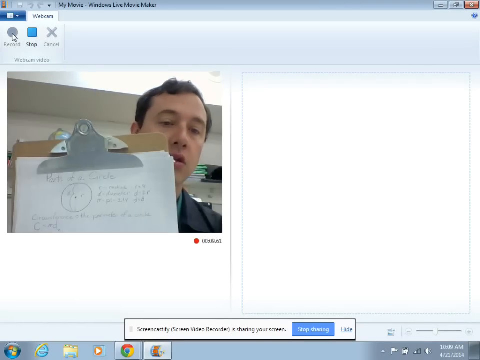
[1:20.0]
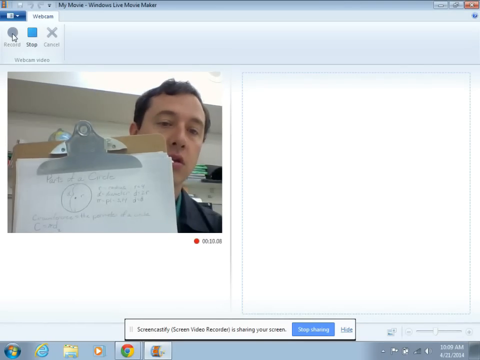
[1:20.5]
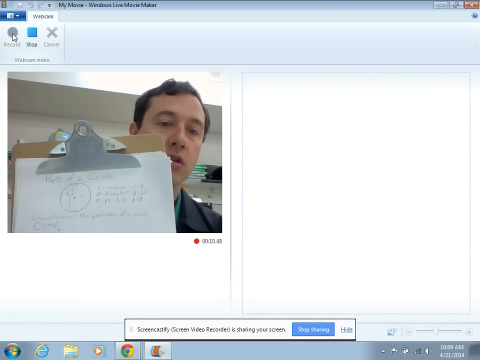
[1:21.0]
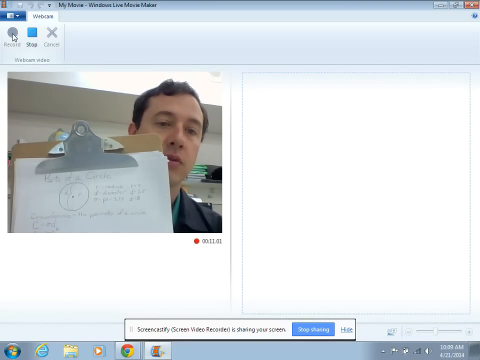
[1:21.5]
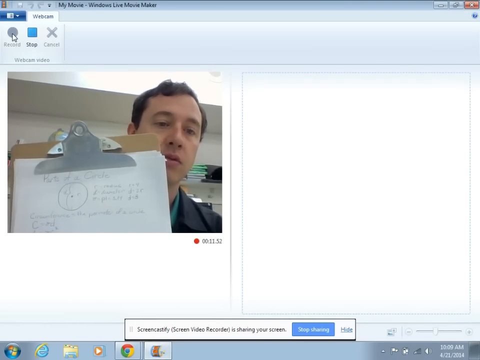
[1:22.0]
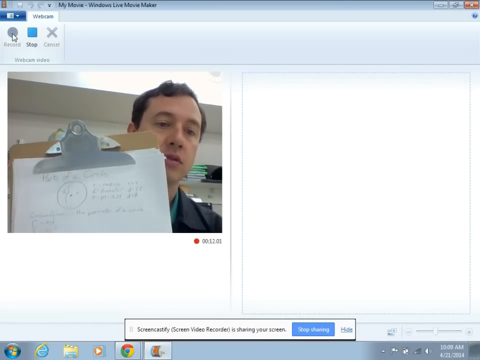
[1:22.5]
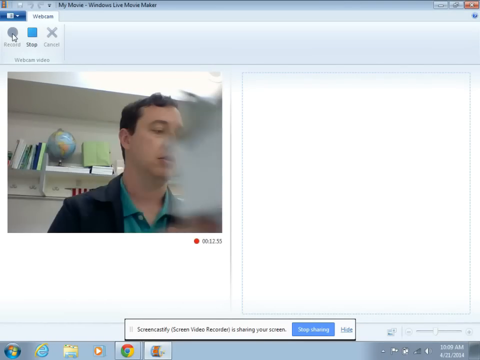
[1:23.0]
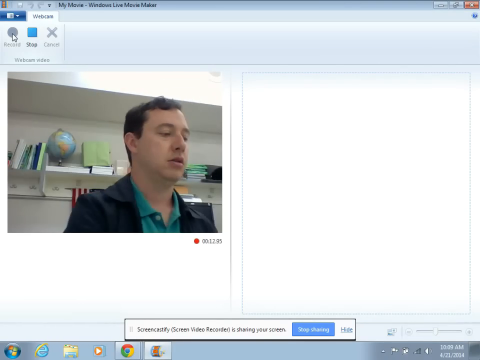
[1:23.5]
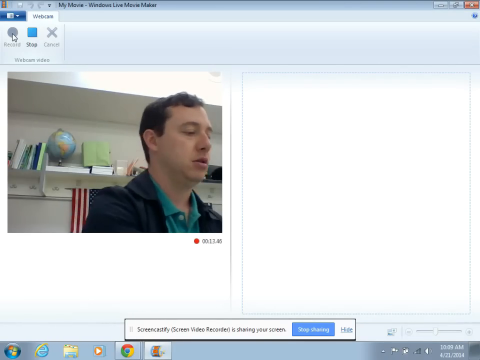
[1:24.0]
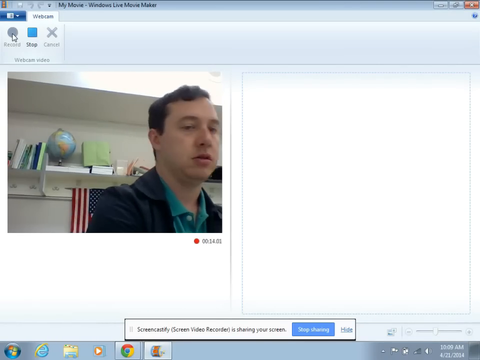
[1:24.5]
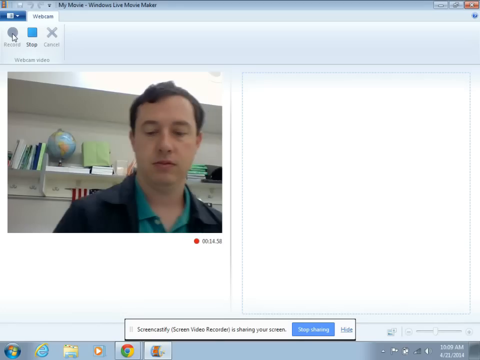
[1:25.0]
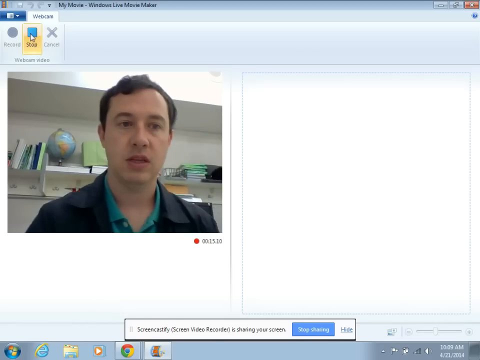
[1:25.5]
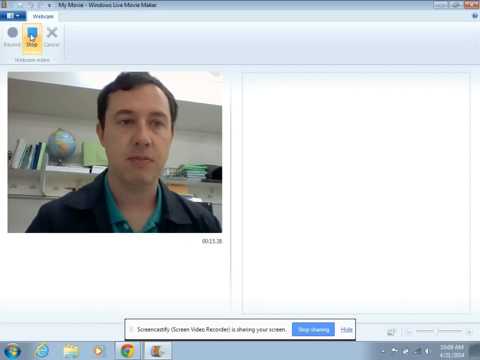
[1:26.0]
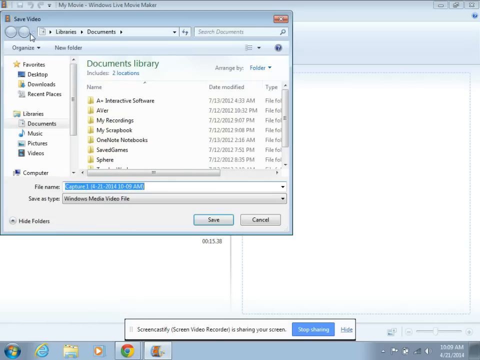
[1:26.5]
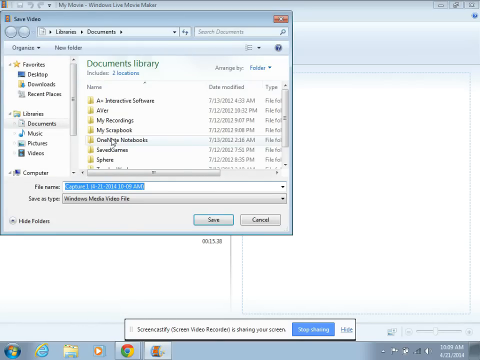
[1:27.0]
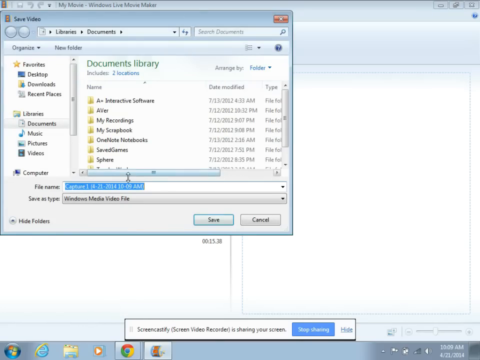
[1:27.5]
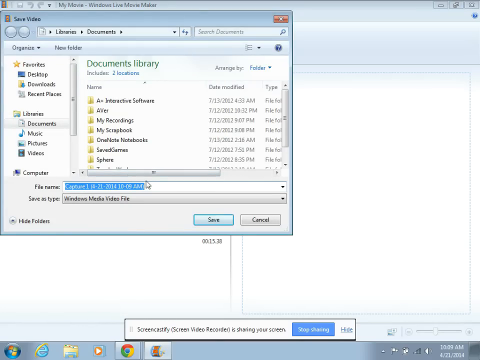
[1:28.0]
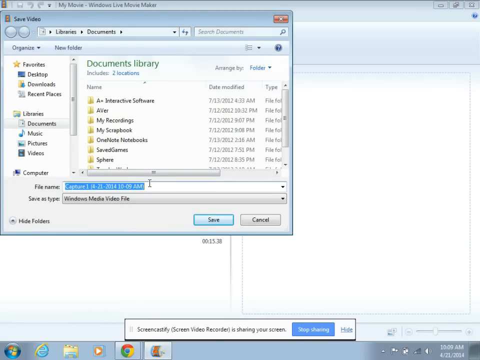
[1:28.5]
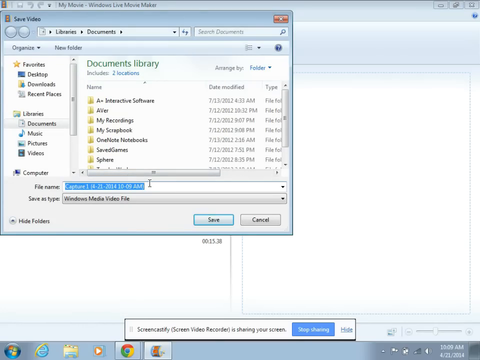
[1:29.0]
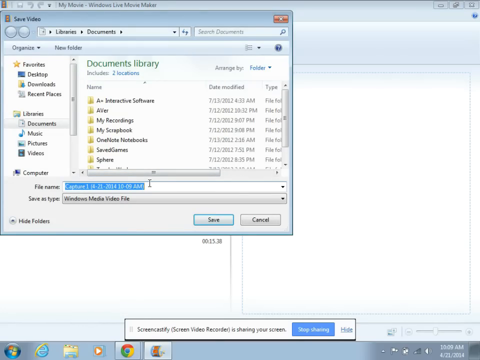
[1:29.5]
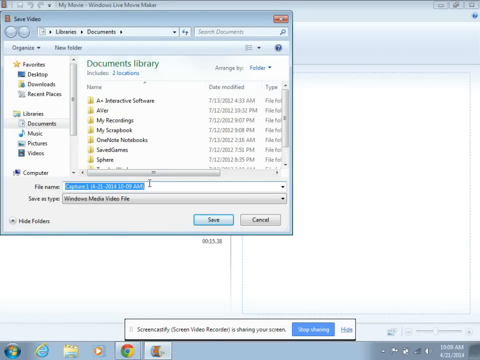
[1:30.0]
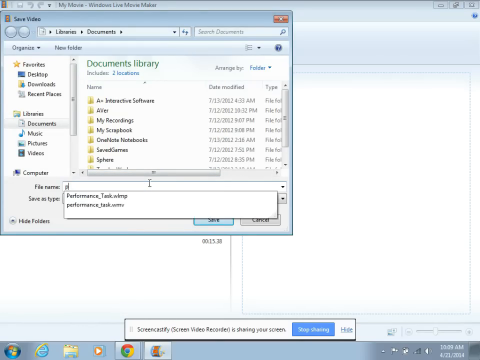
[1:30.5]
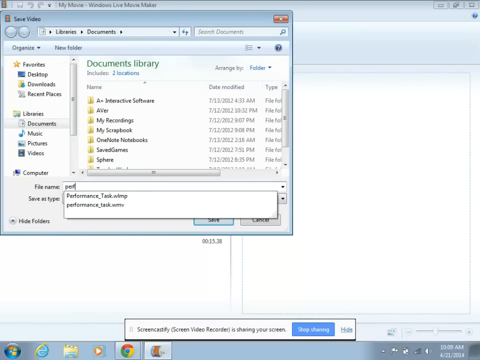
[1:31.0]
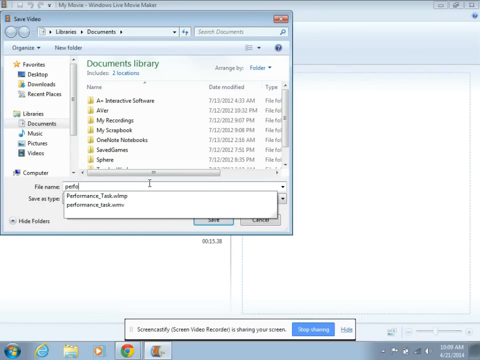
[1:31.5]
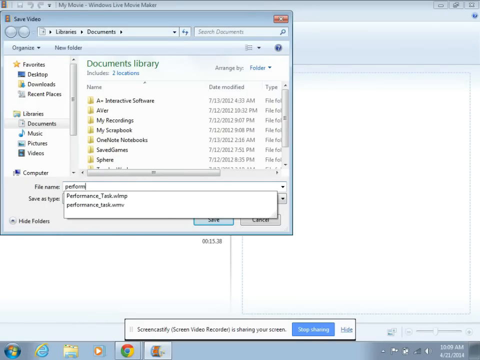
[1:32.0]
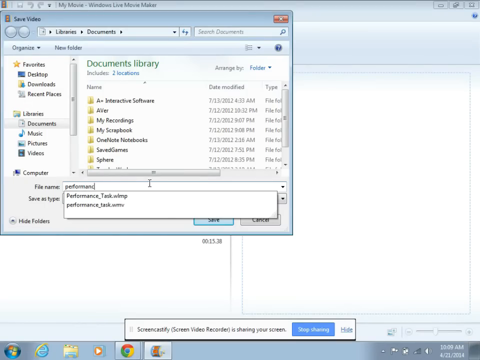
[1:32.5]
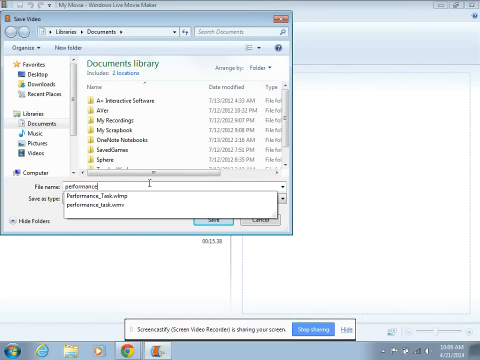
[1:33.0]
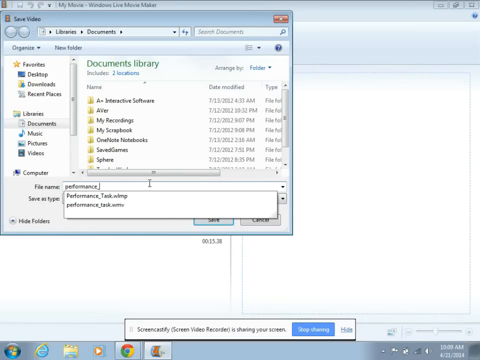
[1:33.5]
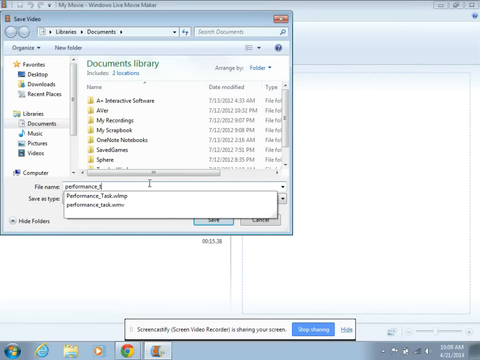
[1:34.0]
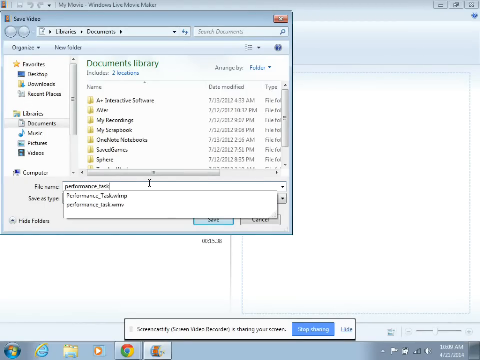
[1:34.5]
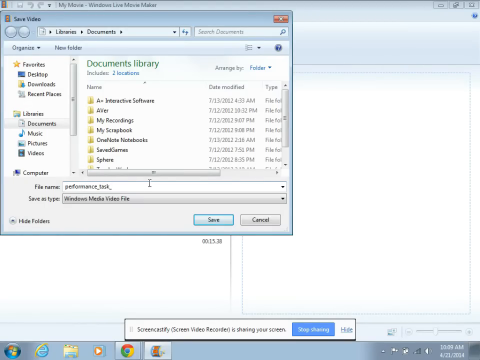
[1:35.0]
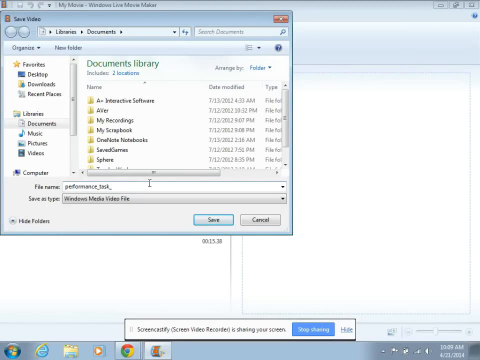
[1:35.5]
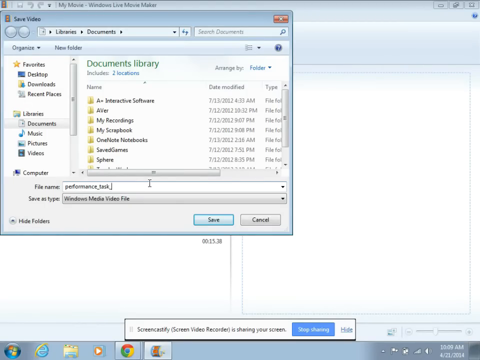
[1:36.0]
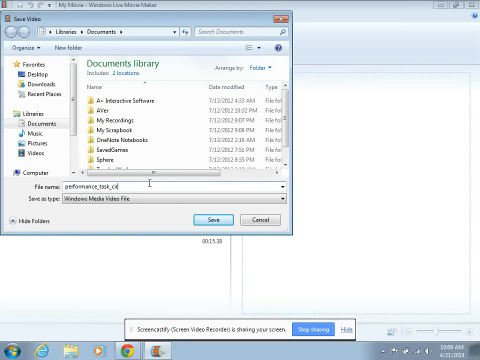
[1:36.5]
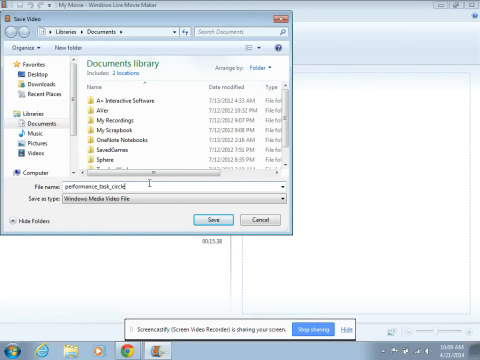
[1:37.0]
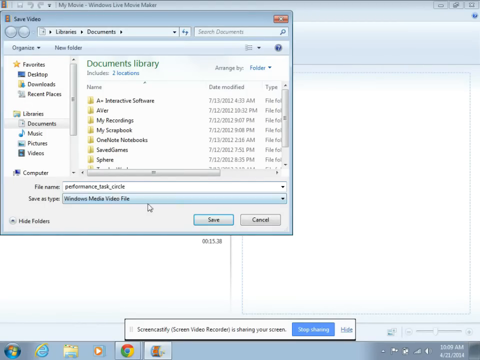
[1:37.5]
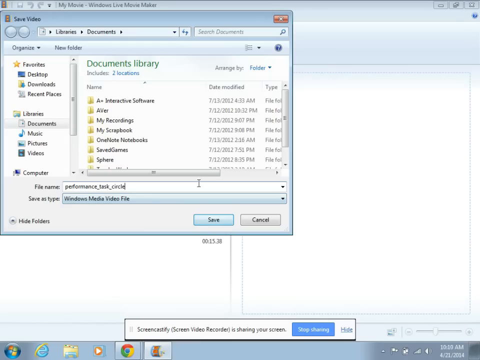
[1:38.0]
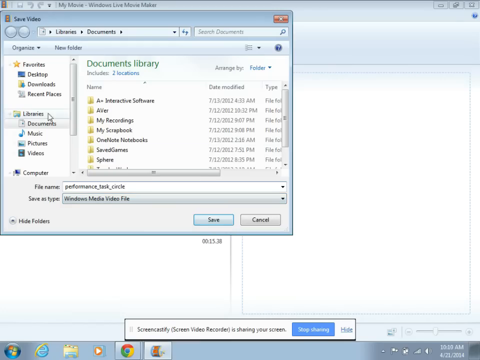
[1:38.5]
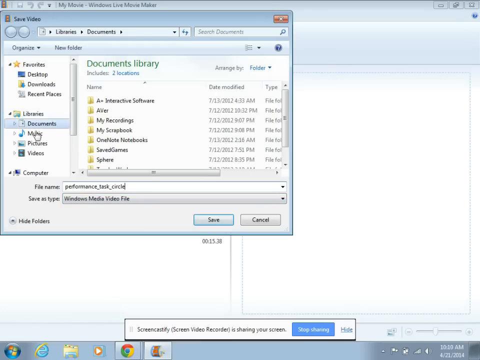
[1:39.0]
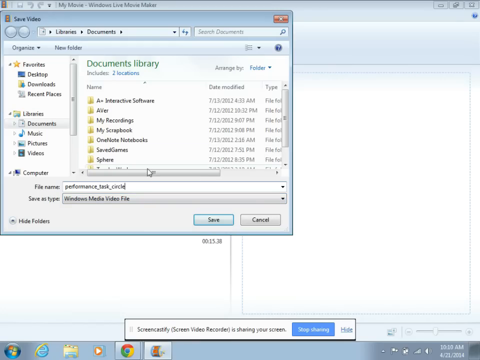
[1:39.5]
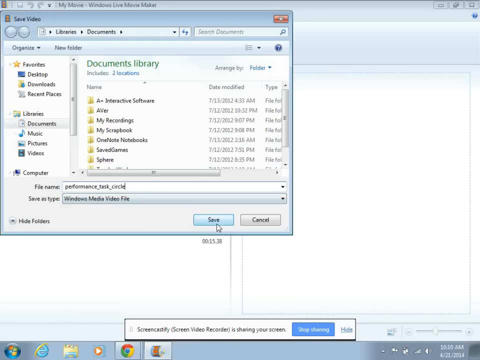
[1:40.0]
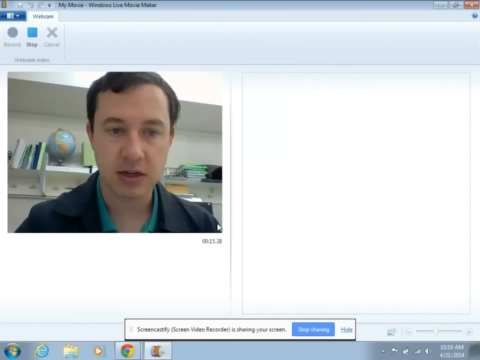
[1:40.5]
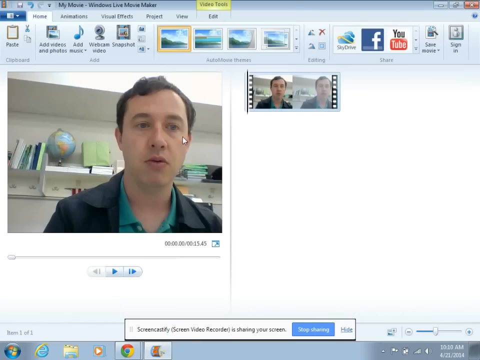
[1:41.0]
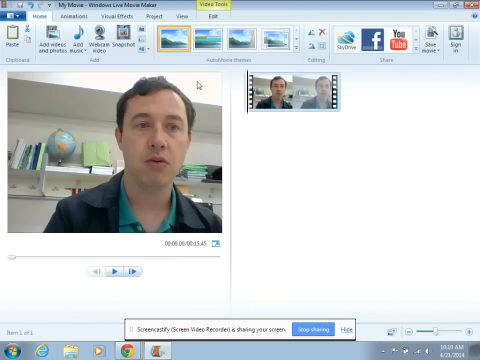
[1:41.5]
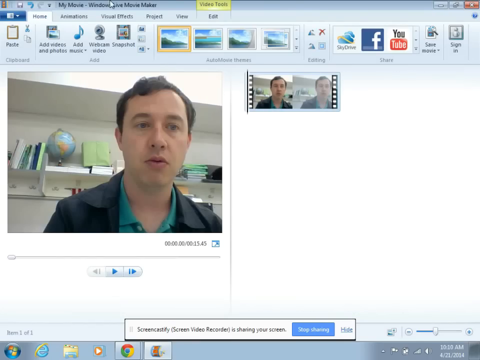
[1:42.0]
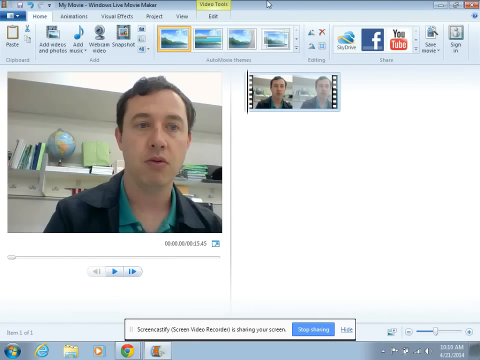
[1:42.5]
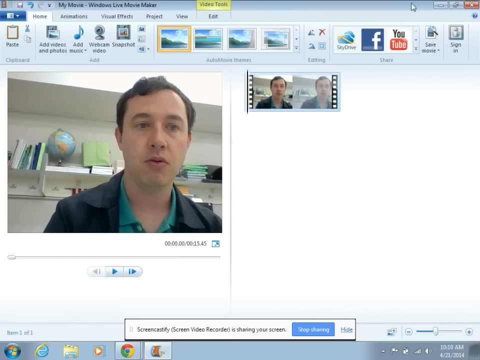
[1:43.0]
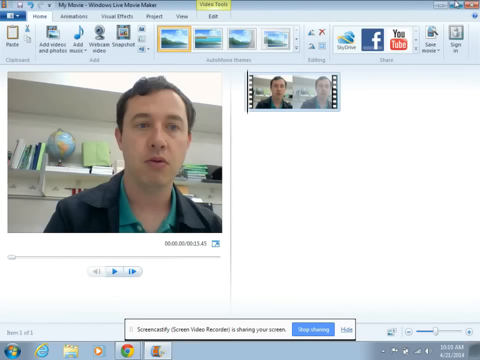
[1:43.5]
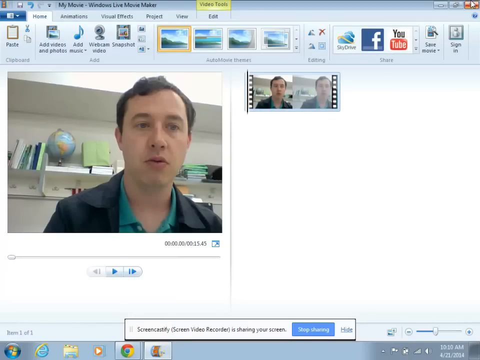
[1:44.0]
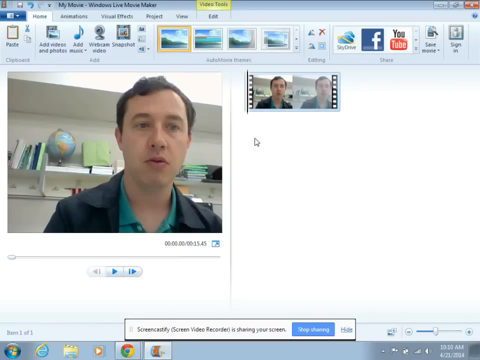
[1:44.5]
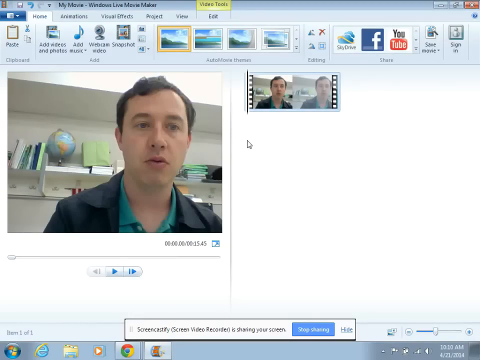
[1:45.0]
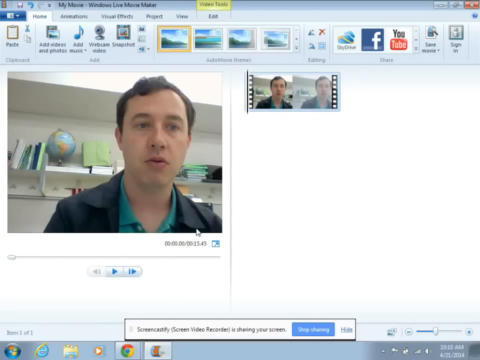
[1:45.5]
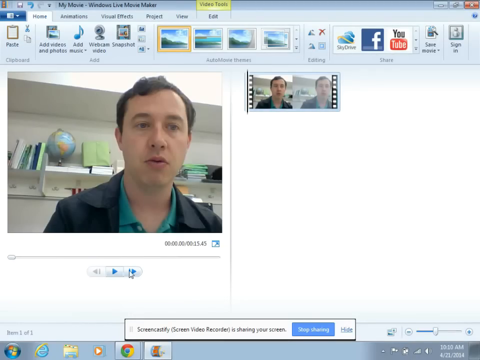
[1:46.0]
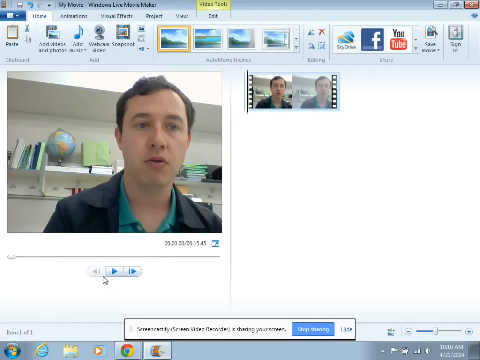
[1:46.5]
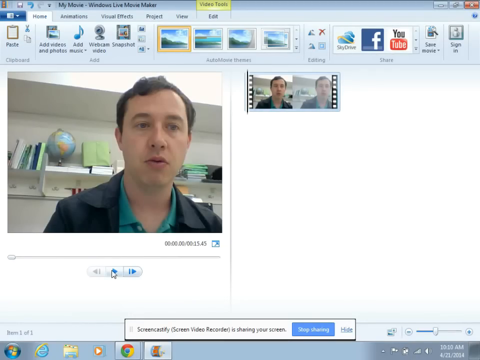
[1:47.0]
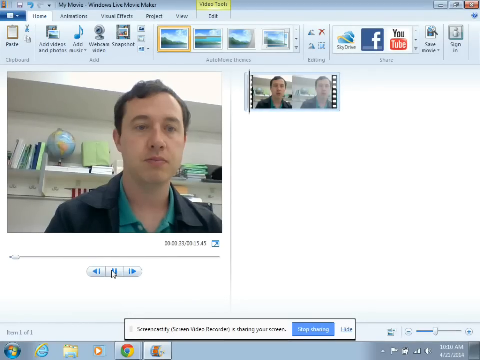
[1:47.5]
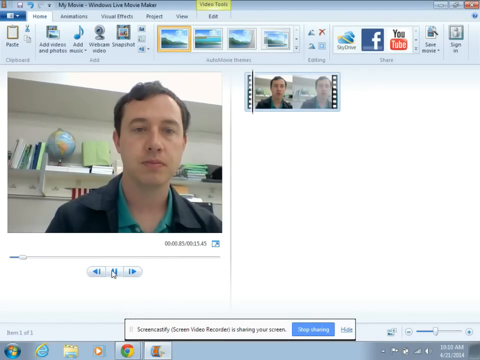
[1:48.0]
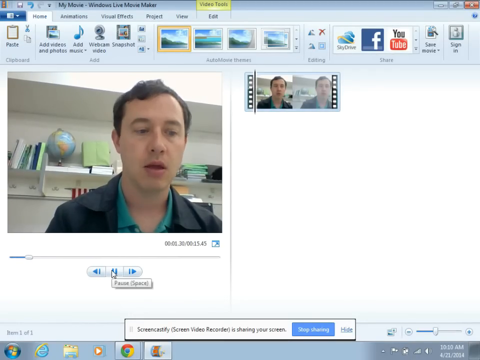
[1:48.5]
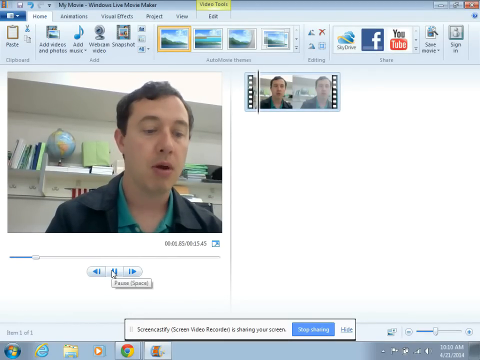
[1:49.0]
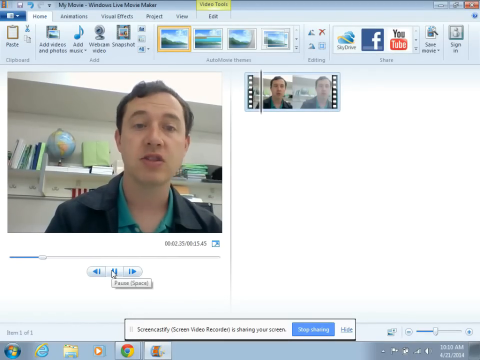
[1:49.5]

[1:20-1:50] The man, who looks like a teacher, brings the clipboard closer to the camera, apparently to show what is written on it, but its contents are still not entirely clear. He then seems to save the video he just filmed on his laptop. Shortly after, he cuts the video; he appears to be recording and editing video of himself, filming and cutting it. He opens the video of himself again, apparently the file he saved on his computer, and this part closes with him finishing the cut.